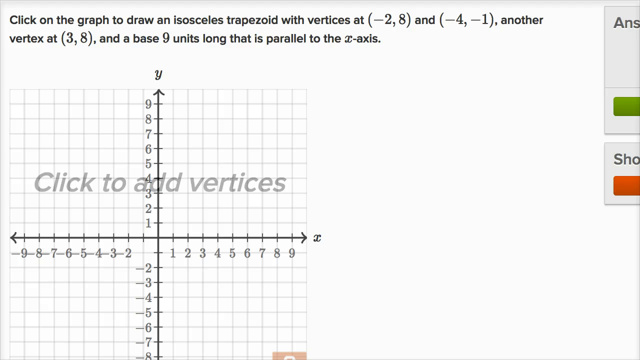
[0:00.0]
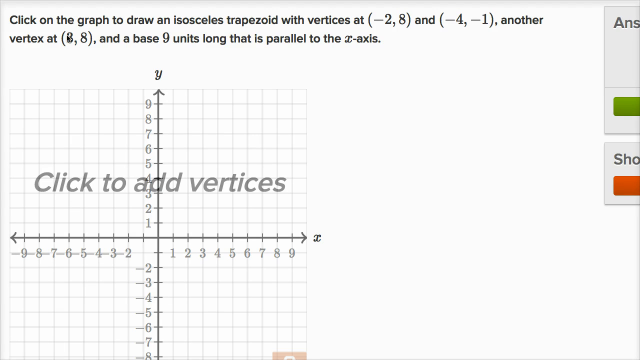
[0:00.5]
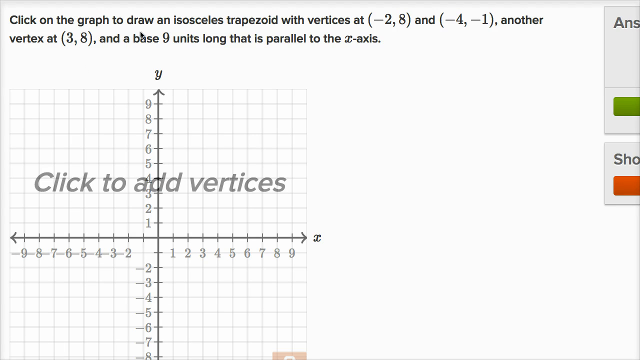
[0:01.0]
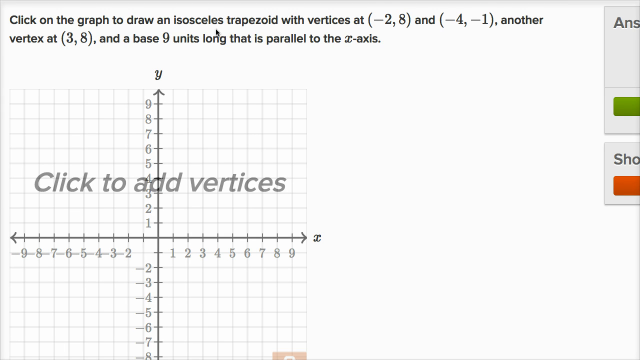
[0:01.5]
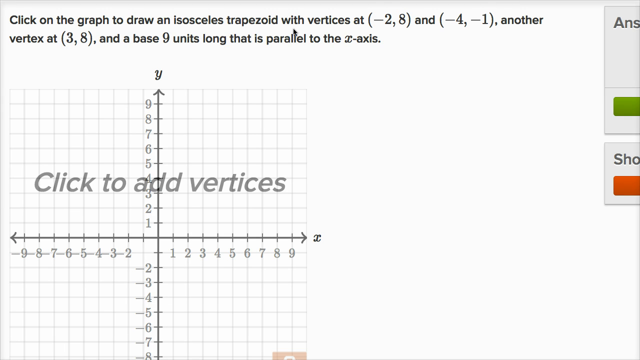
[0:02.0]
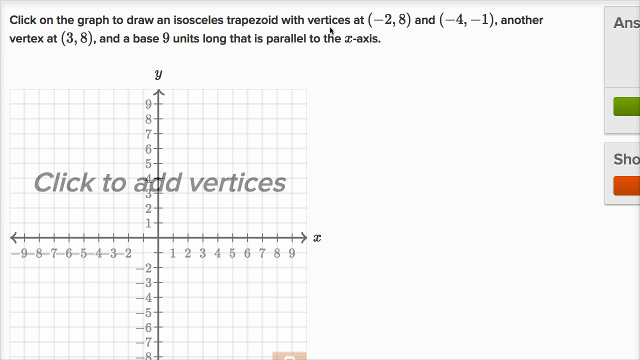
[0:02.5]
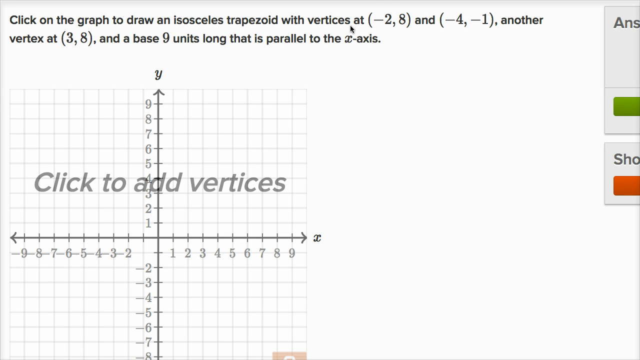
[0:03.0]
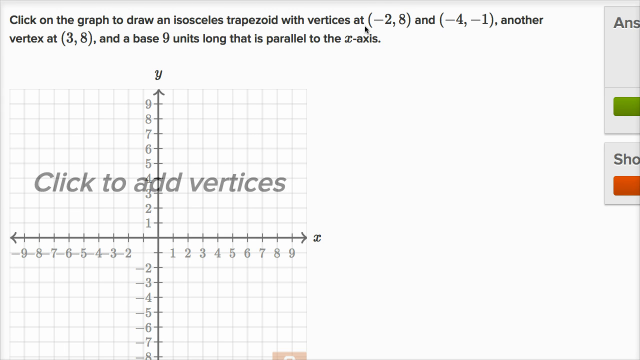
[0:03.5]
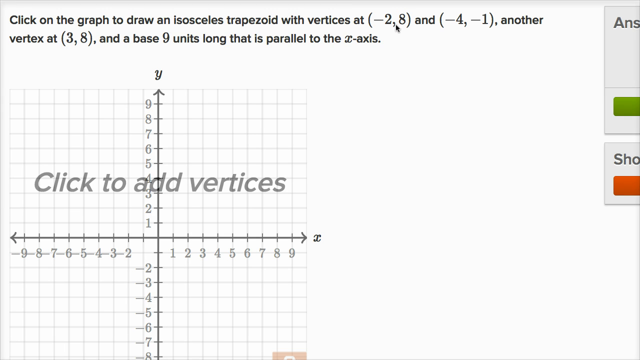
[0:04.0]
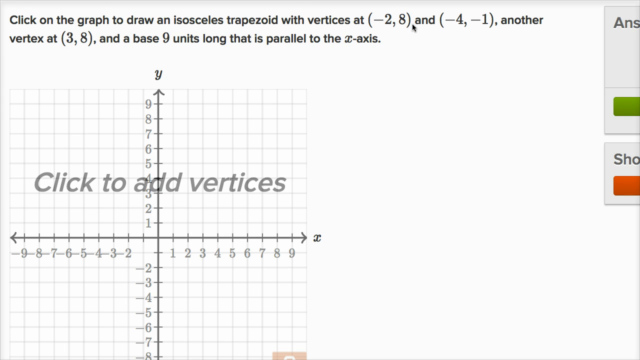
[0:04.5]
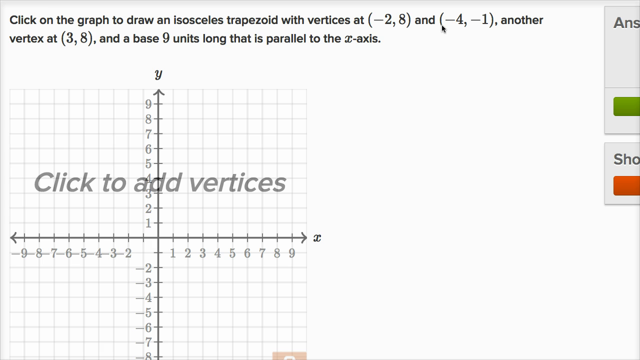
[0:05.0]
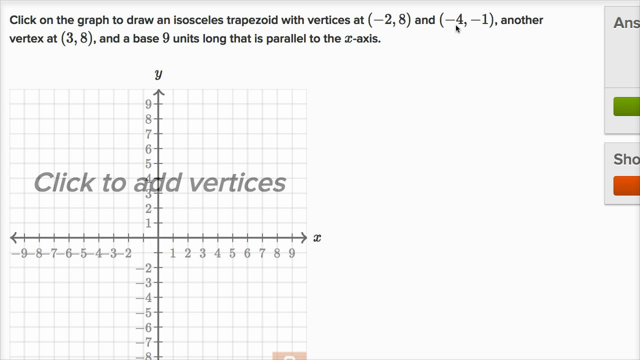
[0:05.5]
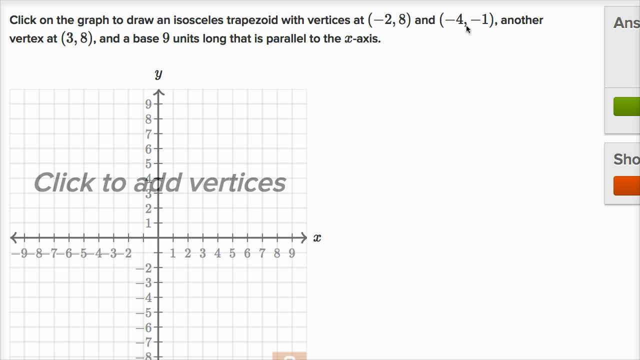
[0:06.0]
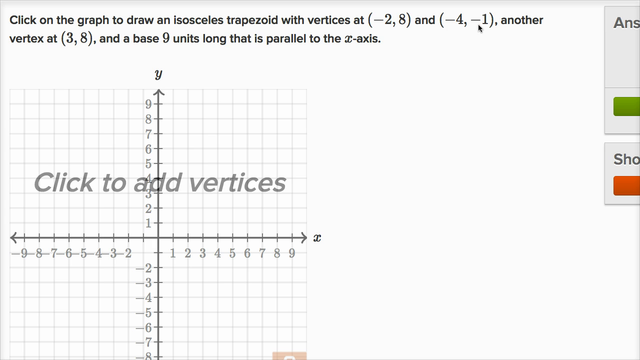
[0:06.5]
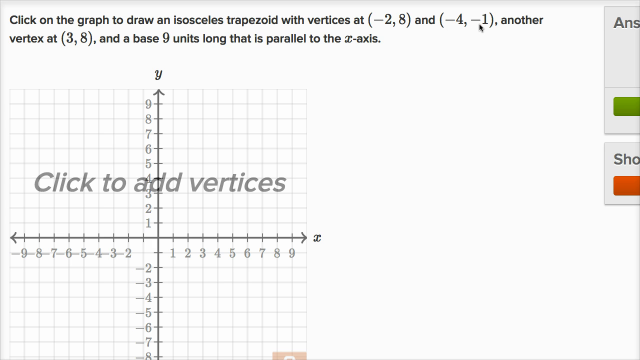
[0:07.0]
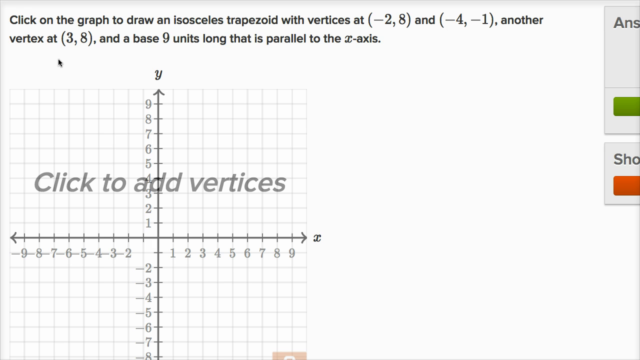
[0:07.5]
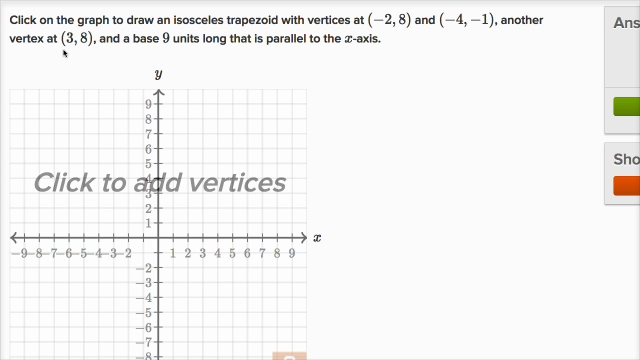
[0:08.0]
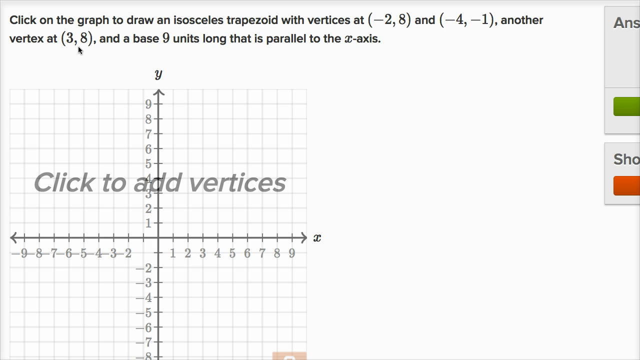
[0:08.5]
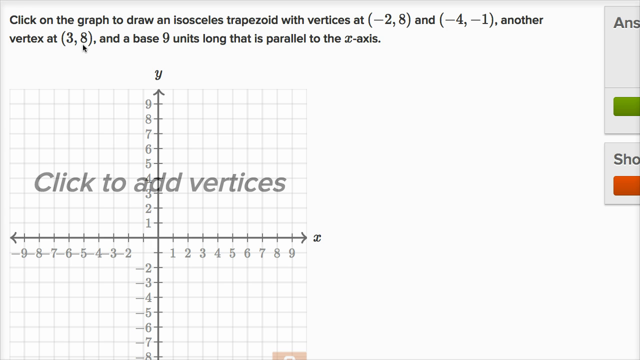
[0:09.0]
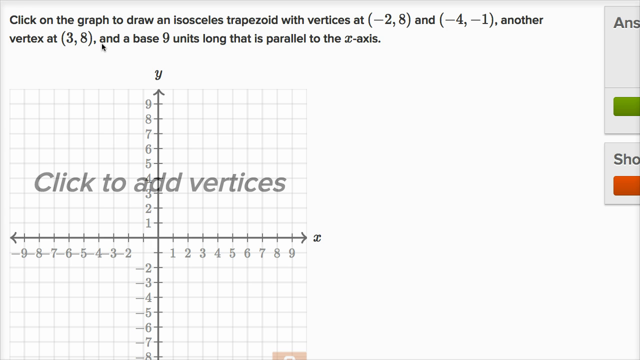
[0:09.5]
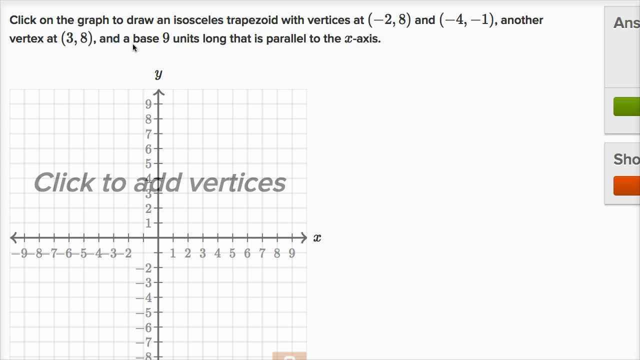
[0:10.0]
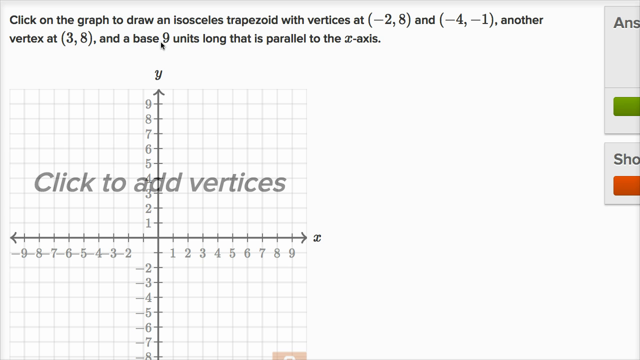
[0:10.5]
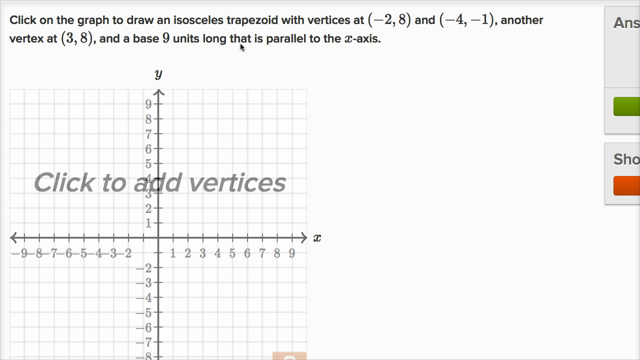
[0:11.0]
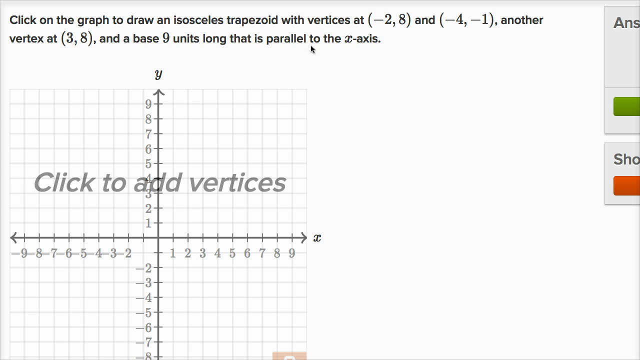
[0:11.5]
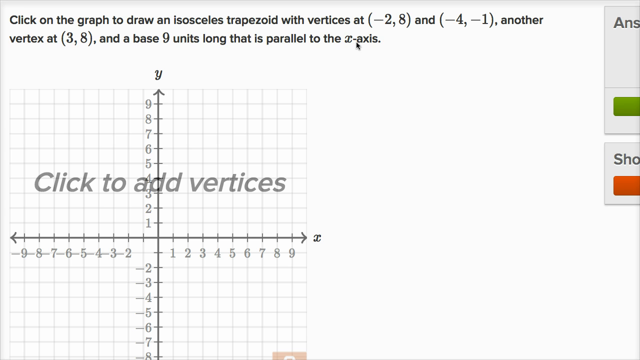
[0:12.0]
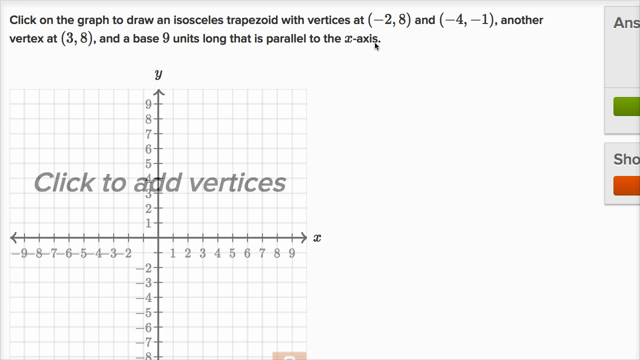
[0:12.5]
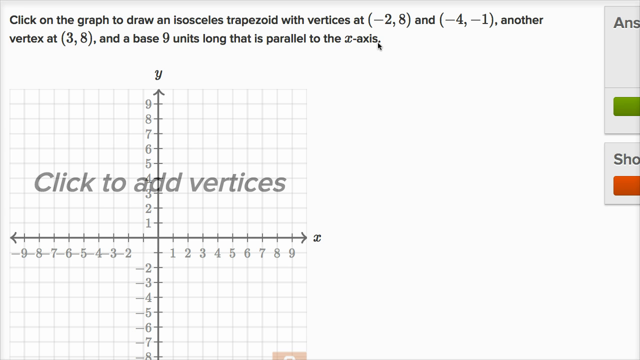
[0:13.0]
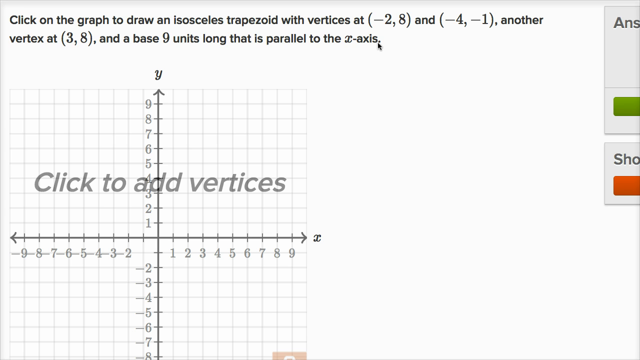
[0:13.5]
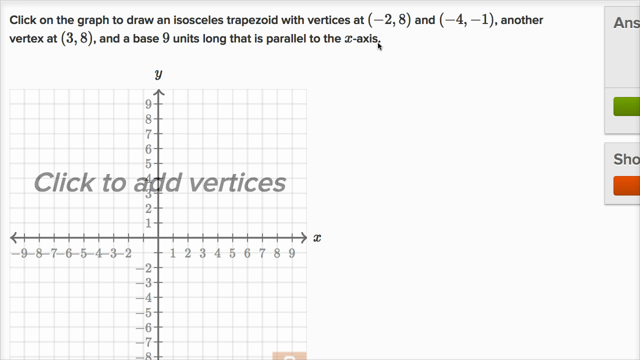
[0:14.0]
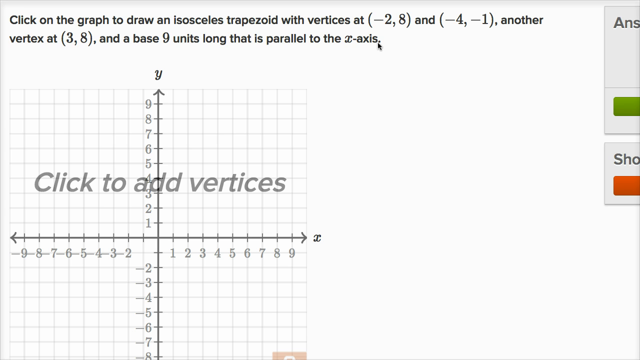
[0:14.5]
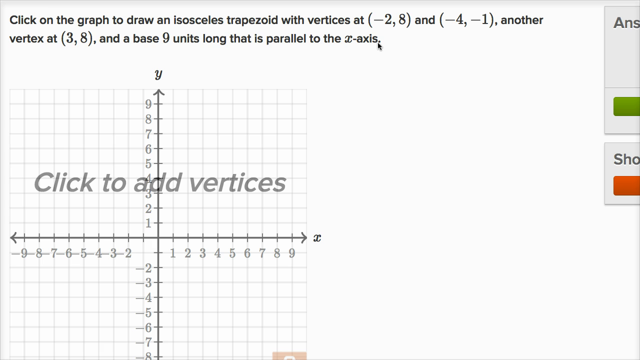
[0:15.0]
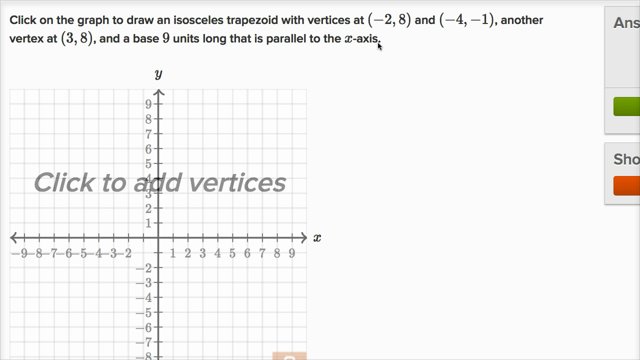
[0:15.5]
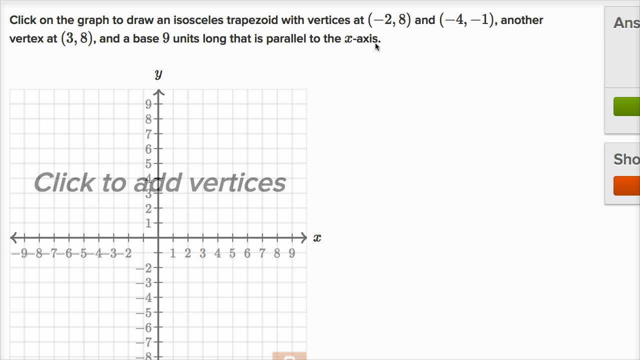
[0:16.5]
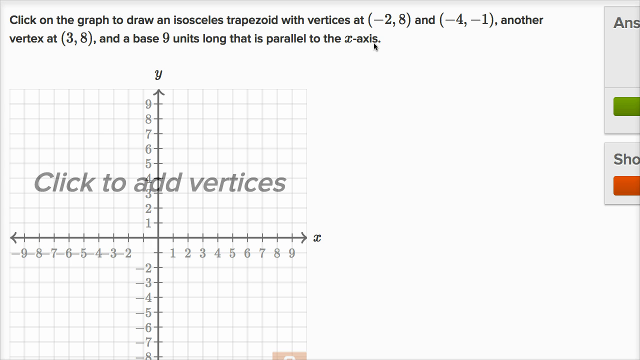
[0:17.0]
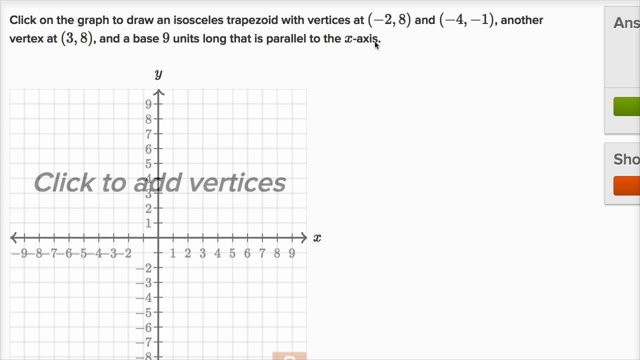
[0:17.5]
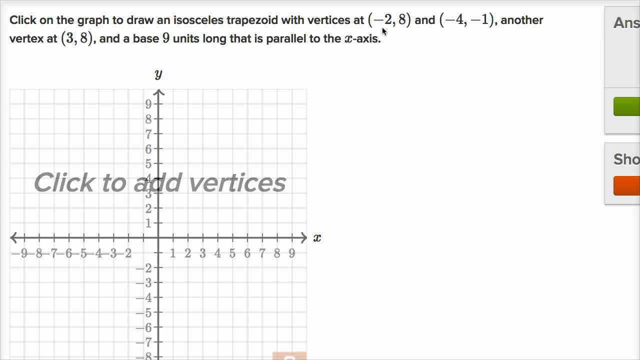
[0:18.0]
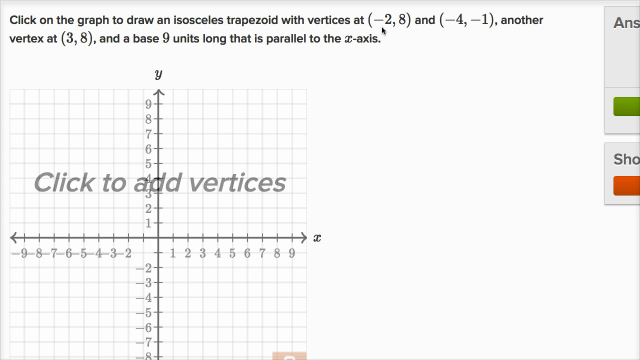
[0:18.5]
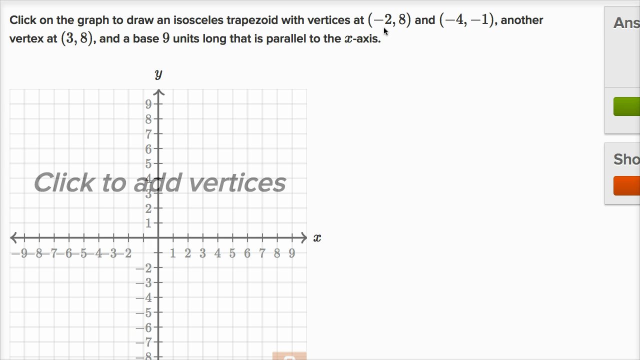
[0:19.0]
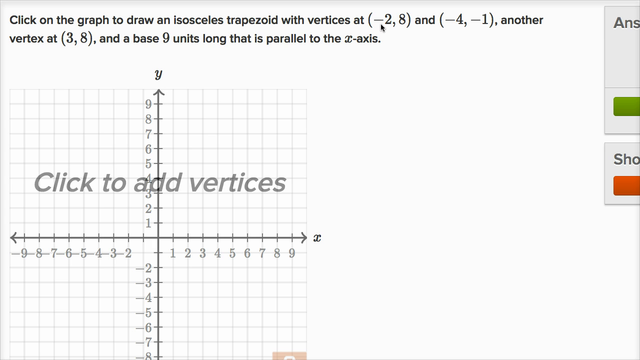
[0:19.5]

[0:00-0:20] A graph with arrows and numbers is shown, along with an instruction to click on the graph to draw an isosceles trapezoid with vertices at (-2, 18) and (-4, -20), a vertex at (3, 8), and a base 9 units long that is parallel to the x-axis. Written in the middle of the graph is "click to add vertices". Numbers from 1 to 9 are shown on the vertical line, and numbers are also shown on the center line.